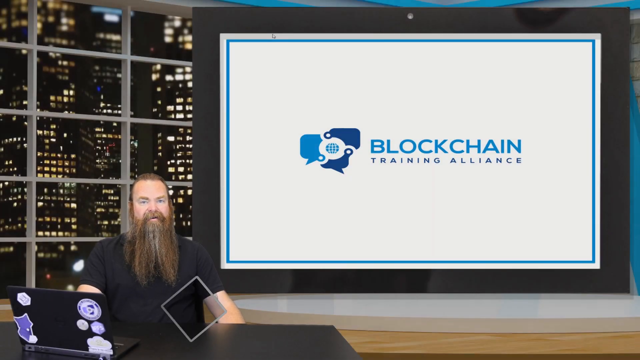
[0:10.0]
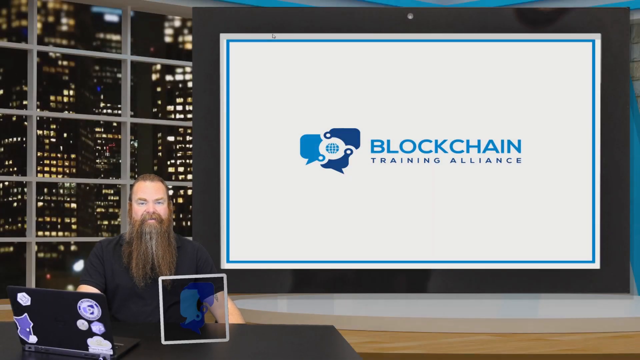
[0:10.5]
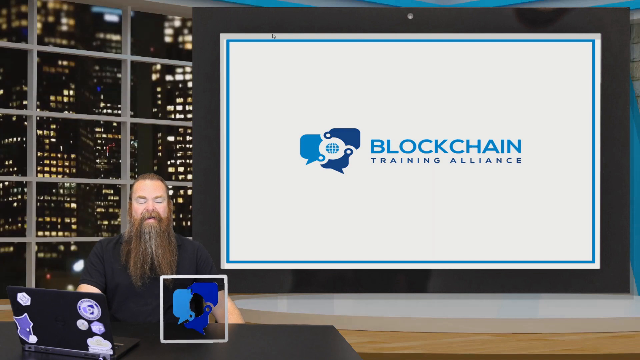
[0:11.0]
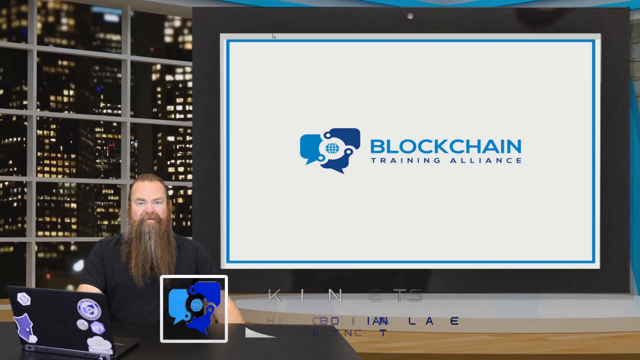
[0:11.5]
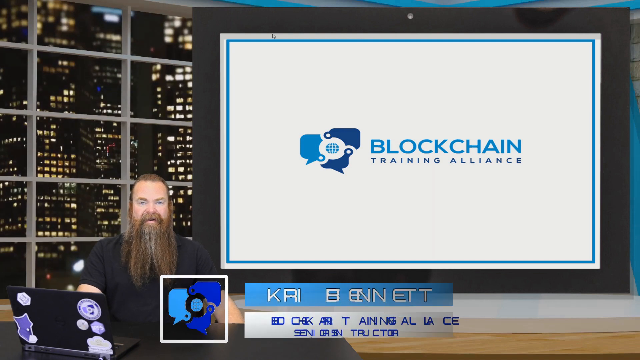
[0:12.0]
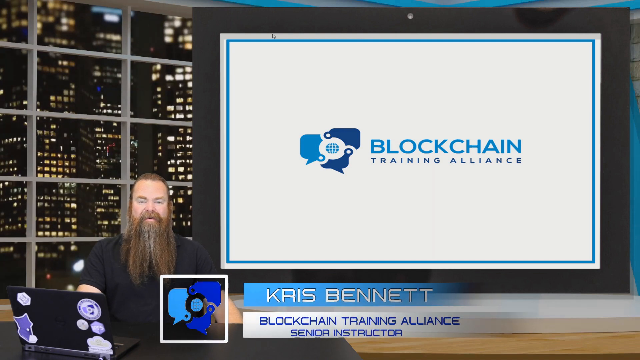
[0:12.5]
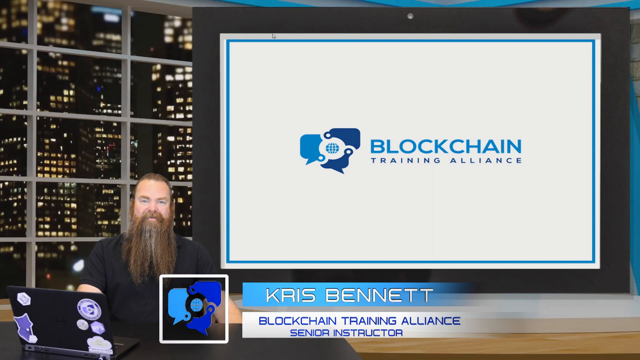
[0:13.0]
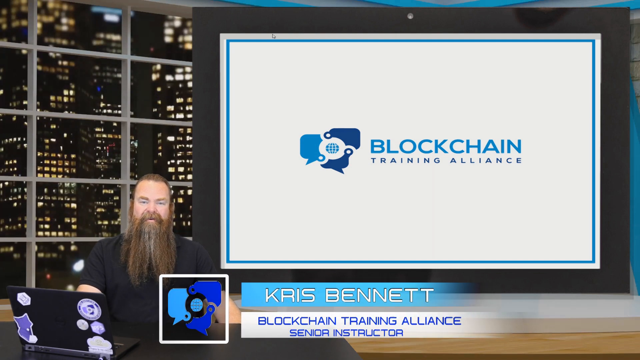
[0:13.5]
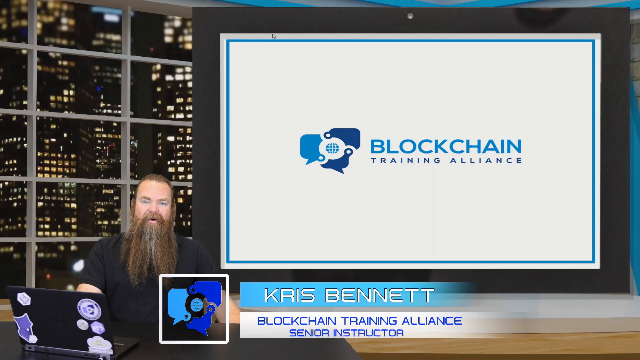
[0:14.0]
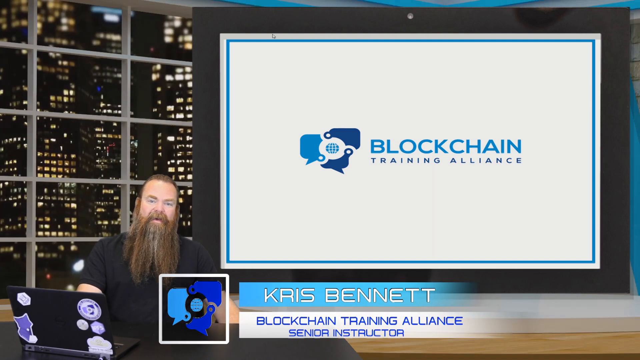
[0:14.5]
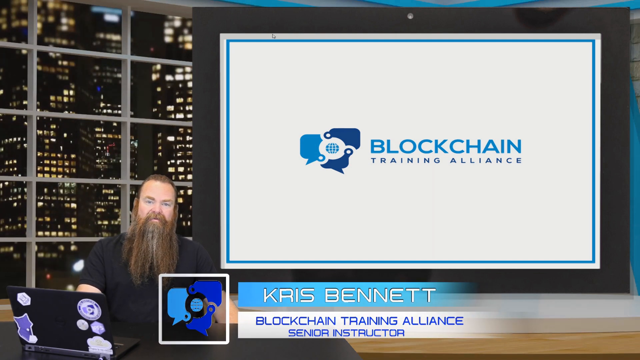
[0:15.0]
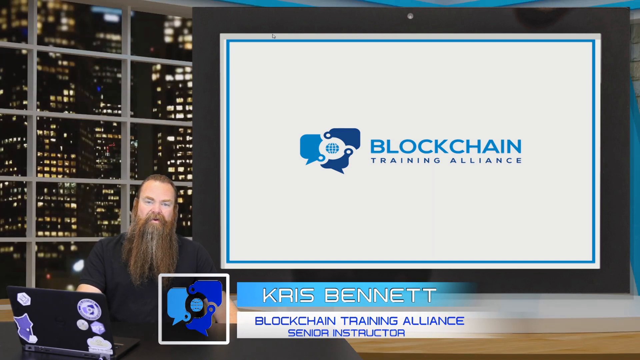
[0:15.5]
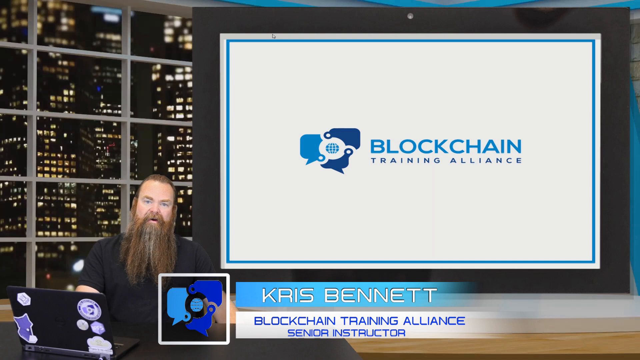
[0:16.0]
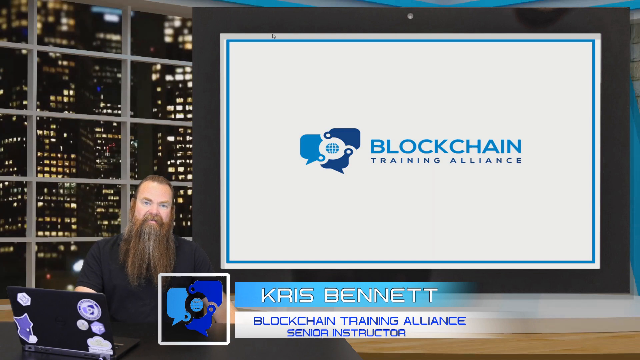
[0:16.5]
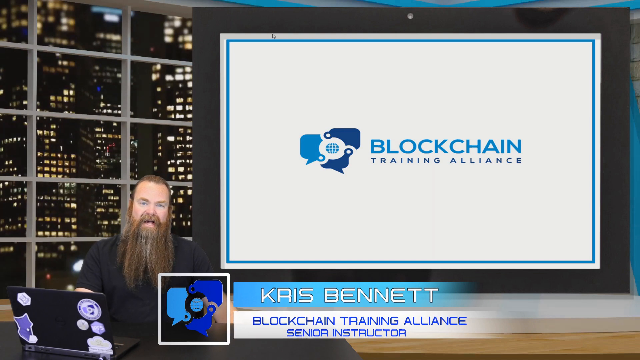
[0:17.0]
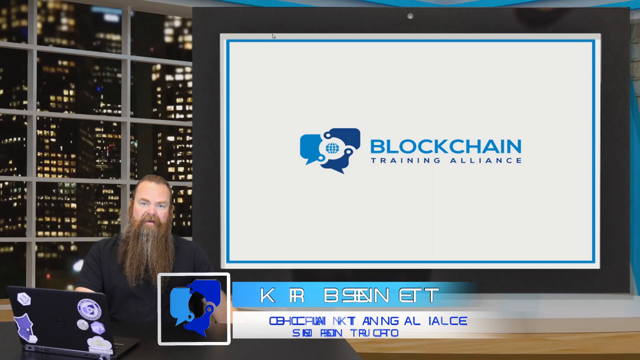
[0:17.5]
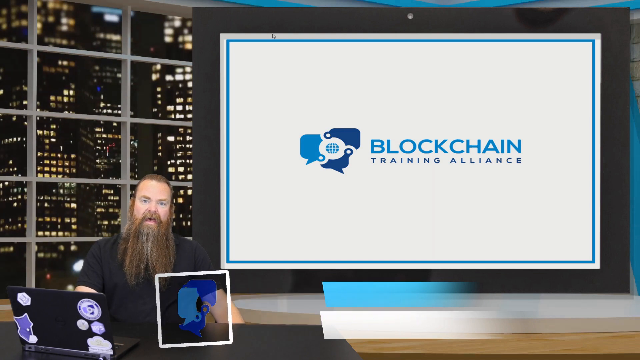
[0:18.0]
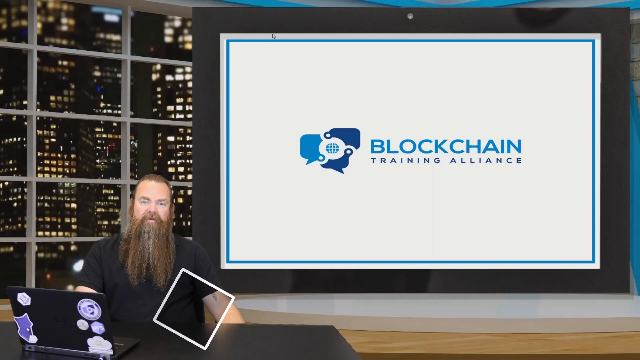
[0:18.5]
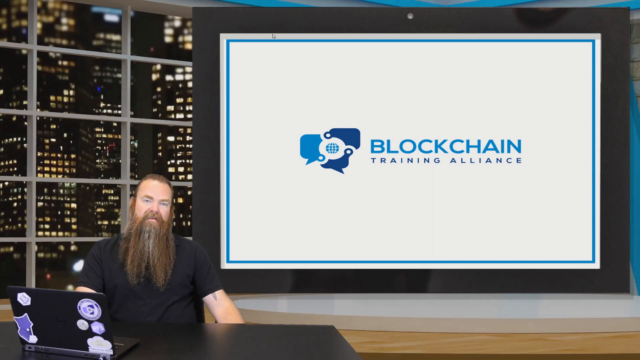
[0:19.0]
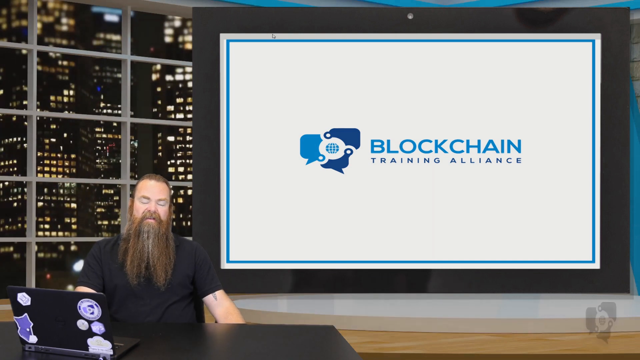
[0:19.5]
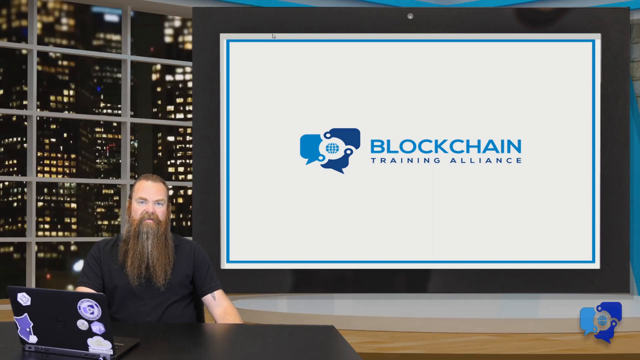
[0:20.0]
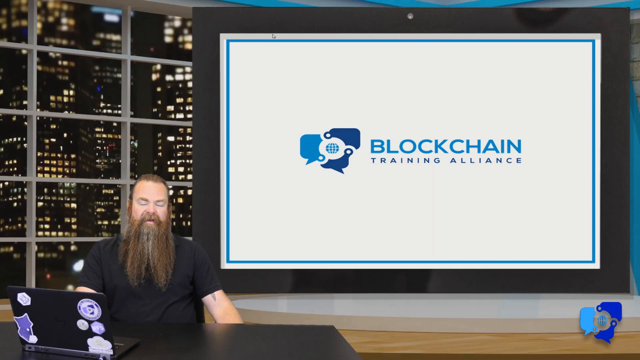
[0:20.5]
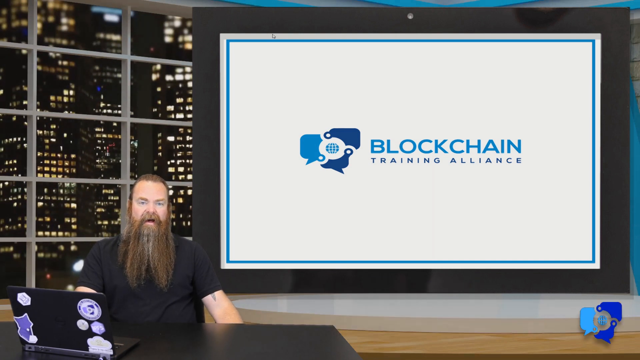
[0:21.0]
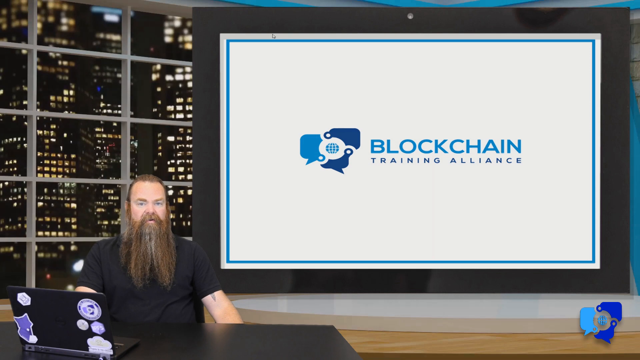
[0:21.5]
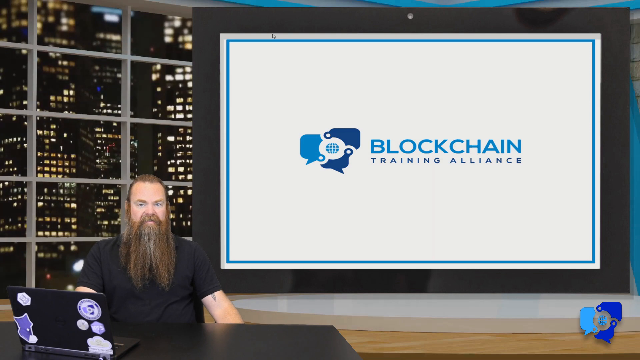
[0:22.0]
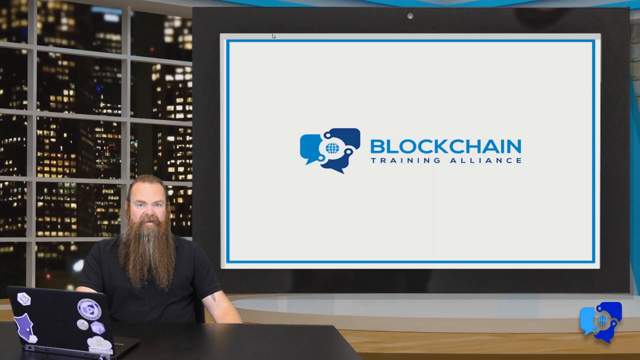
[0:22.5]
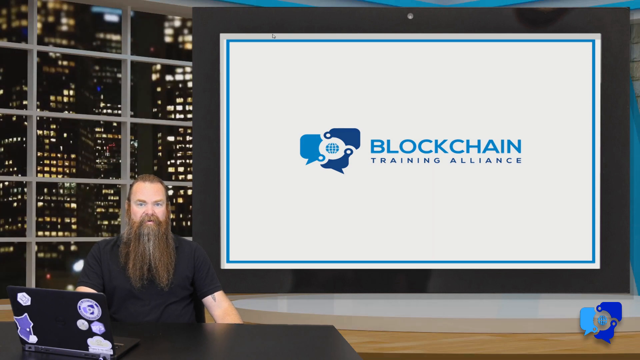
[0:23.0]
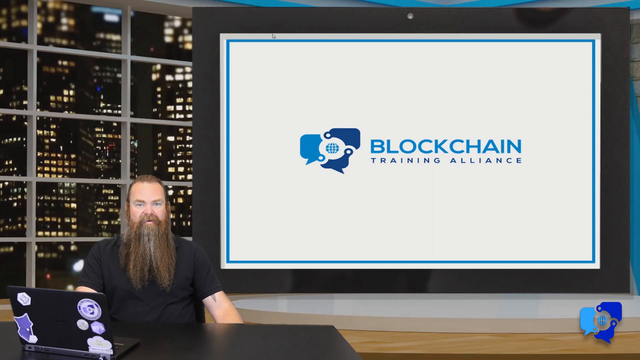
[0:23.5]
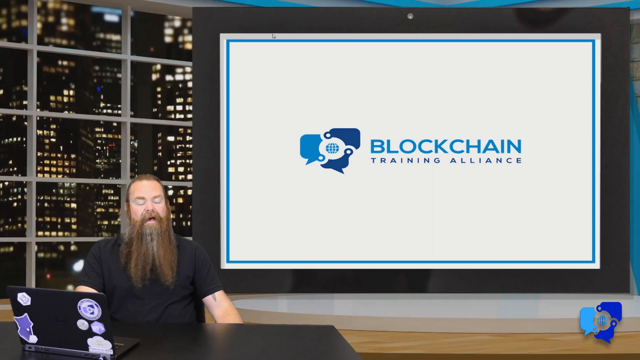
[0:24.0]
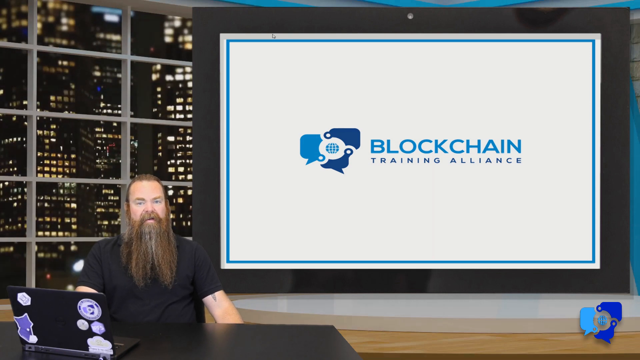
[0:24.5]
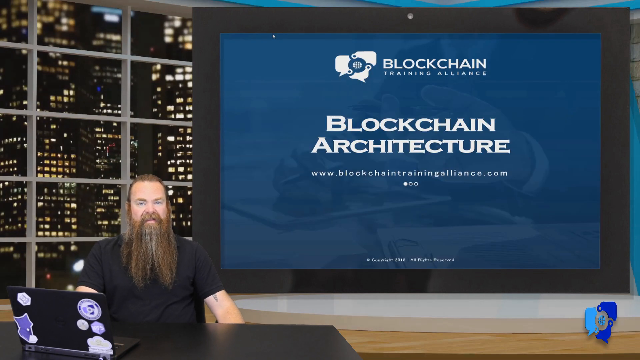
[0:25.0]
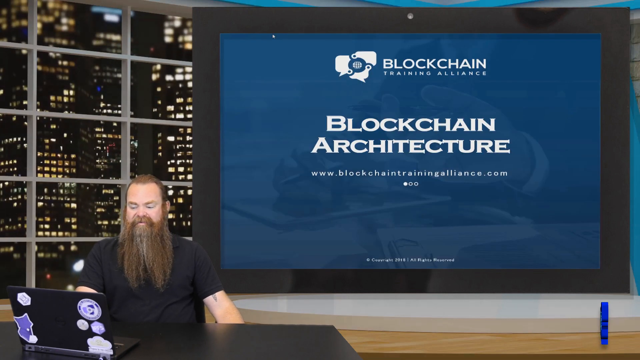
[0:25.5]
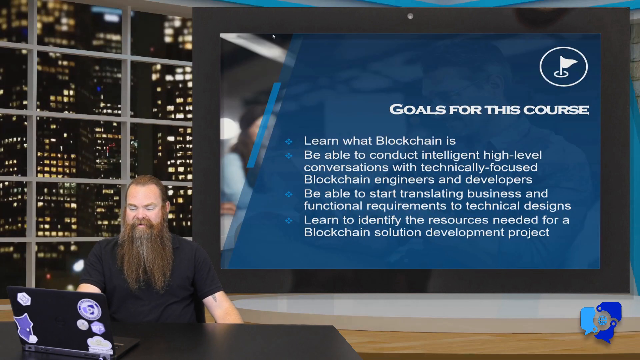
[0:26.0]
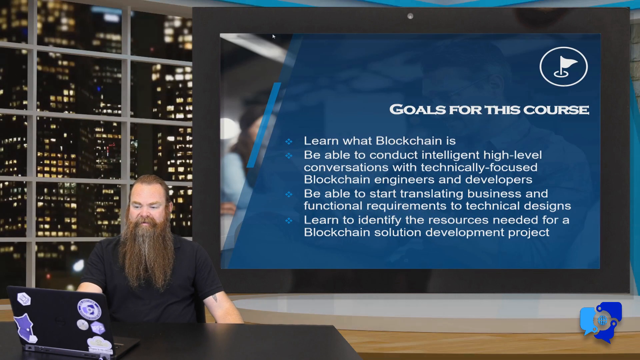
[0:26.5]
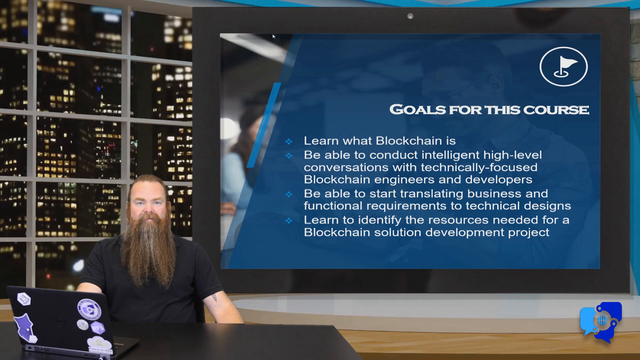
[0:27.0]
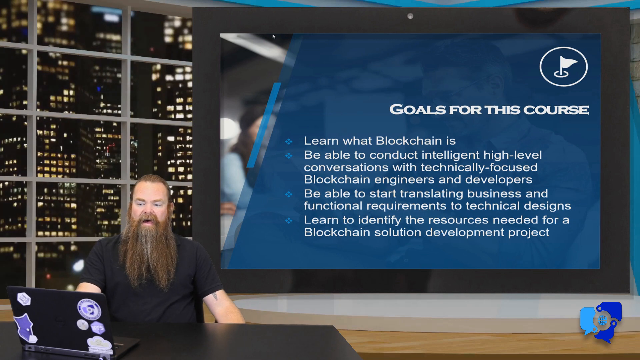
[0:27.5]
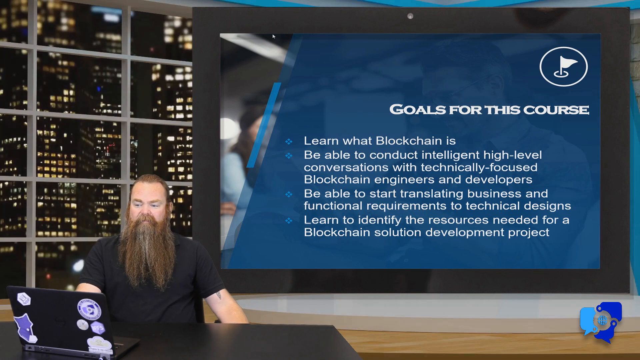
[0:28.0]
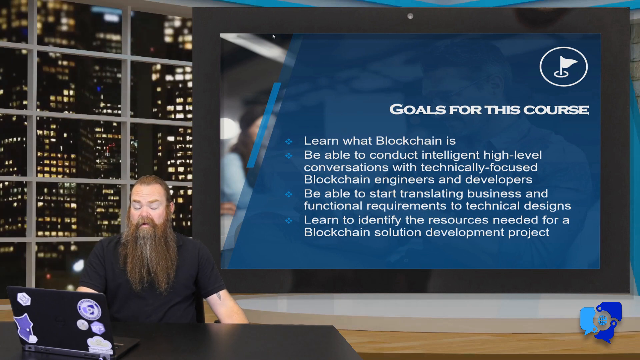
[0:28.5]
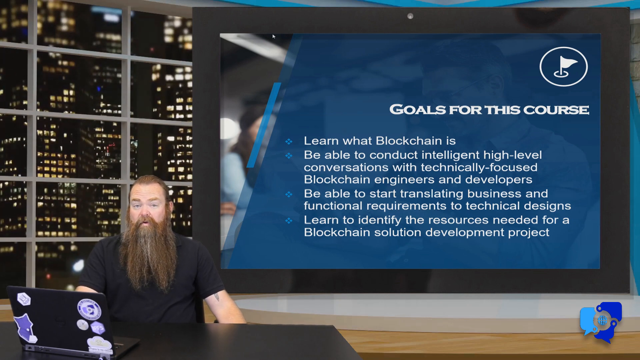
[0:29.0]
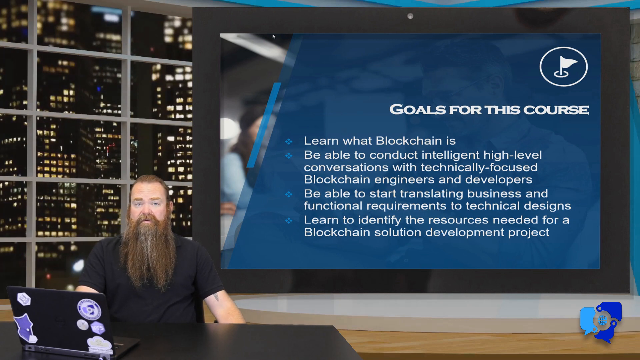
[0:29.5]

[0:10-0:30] On the right of the screen, a large message reads "Blockchain Training Alliance", with a strange icon beside it of what looks to be a globe with dark blue and light blue shapes around its side. To the left is a backdrop of a city at a window, and in front of it is a man with his hair pulled back very tight, probably into a ponytail at the back. His hair is parted and kind of woolly looking, and his beard is pretty long. He is sitting in front of a laptop with odd purple stickers all over it. A caption comes up with his name: "Chris Bennett, Blockchain Training Alliance Senior Instructor". The message on the screen then changes to the goals for the course: "learn what blockchain is, be able to conduct intelligent high-level conversations with technical focused blockchain engineers and developers, and be able to start translating business and functional requirements to technical designs. Learn to identify the resources needed for a blockchain solution development project."